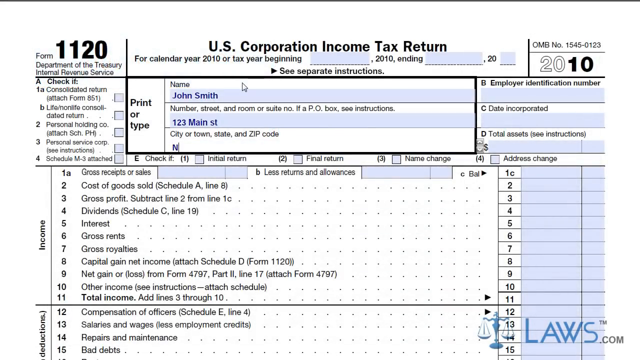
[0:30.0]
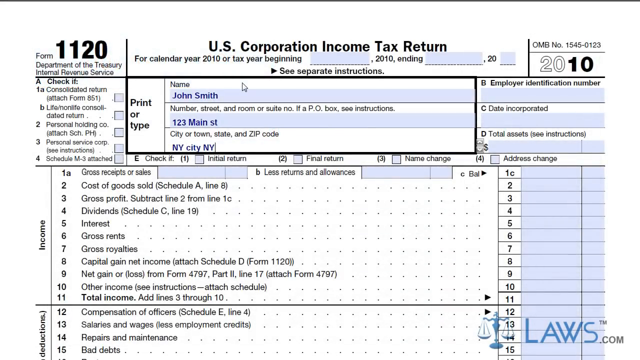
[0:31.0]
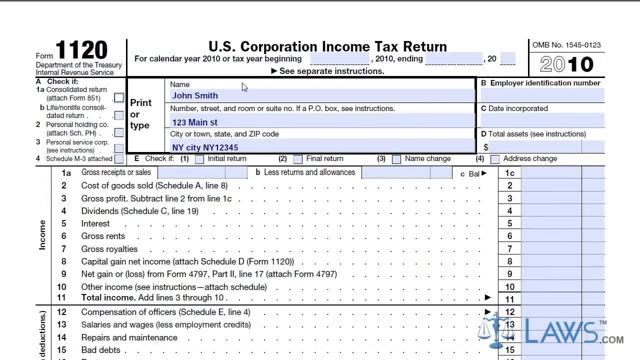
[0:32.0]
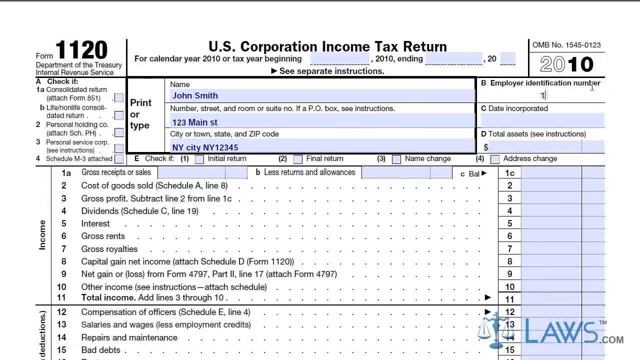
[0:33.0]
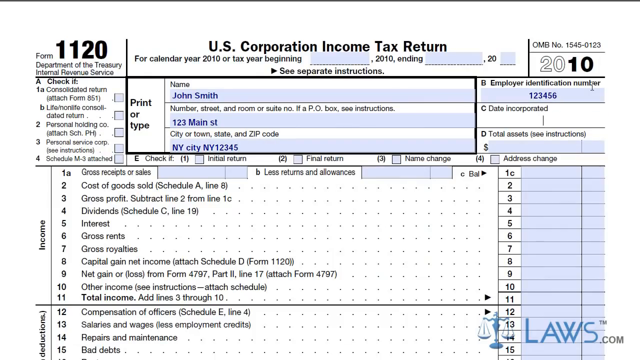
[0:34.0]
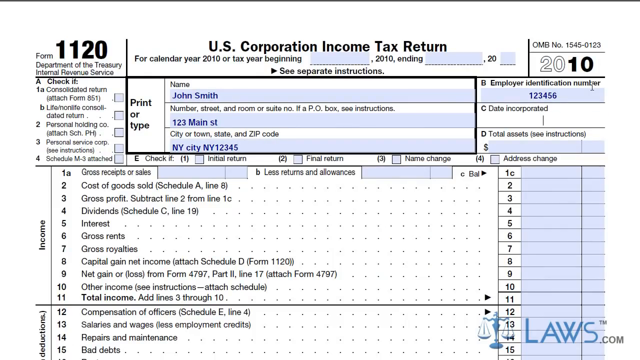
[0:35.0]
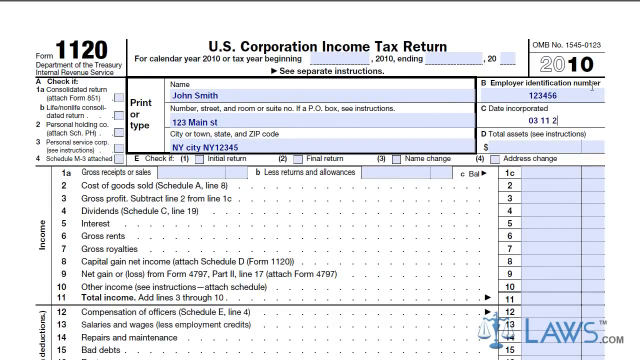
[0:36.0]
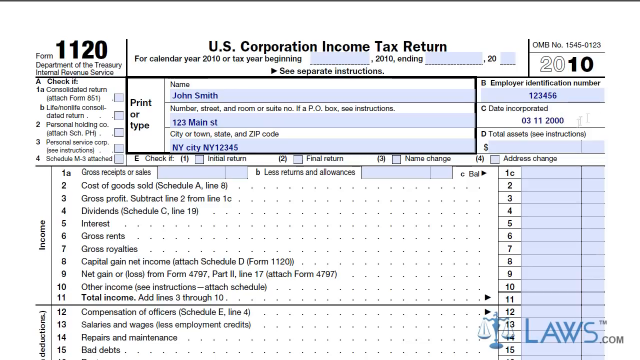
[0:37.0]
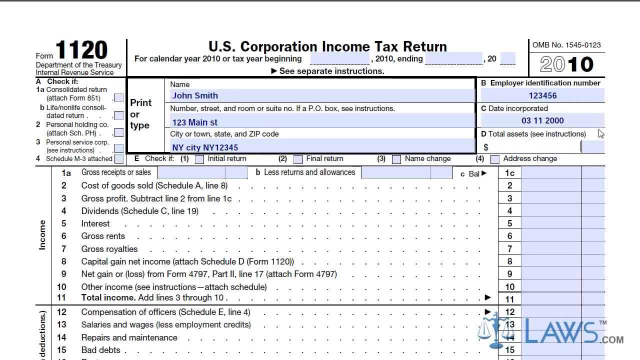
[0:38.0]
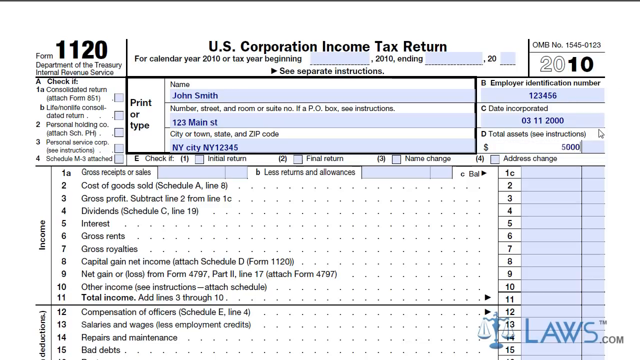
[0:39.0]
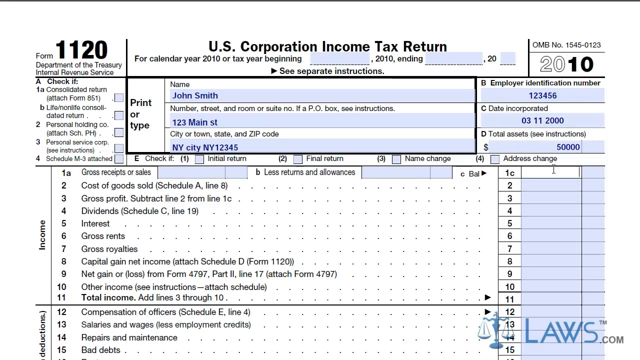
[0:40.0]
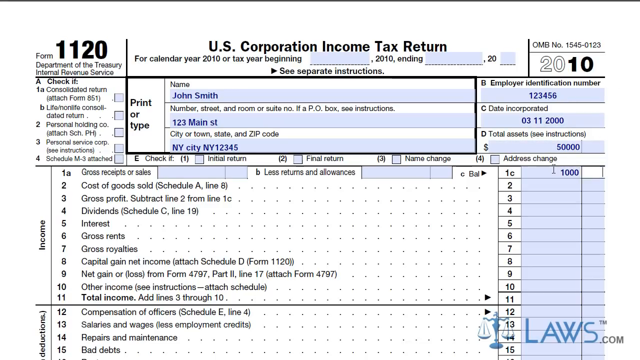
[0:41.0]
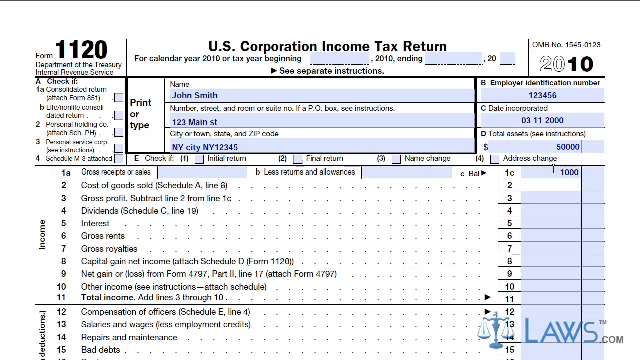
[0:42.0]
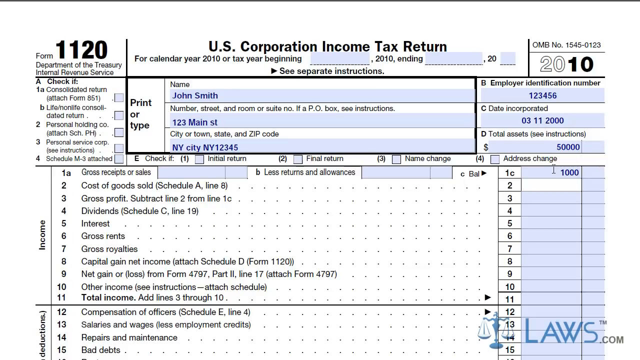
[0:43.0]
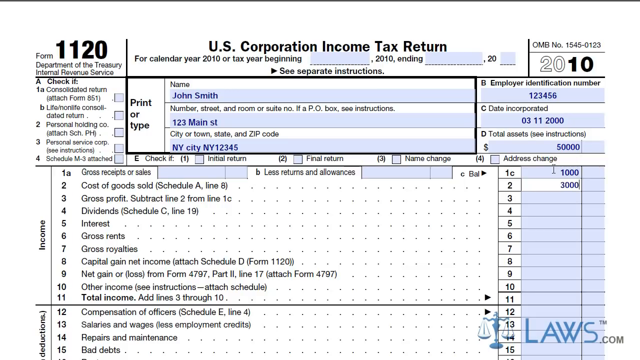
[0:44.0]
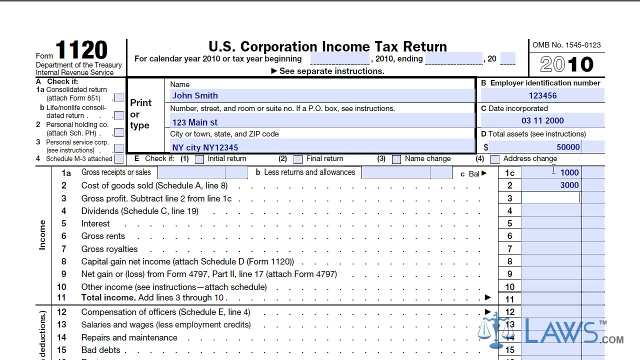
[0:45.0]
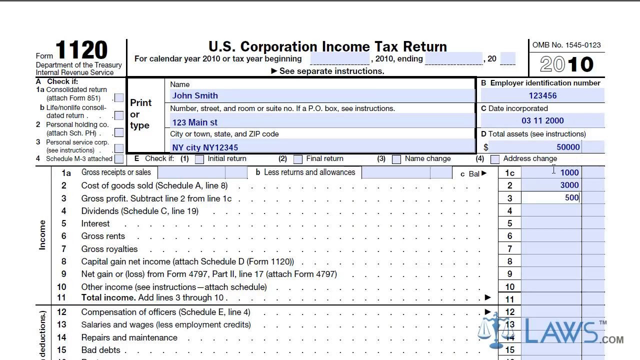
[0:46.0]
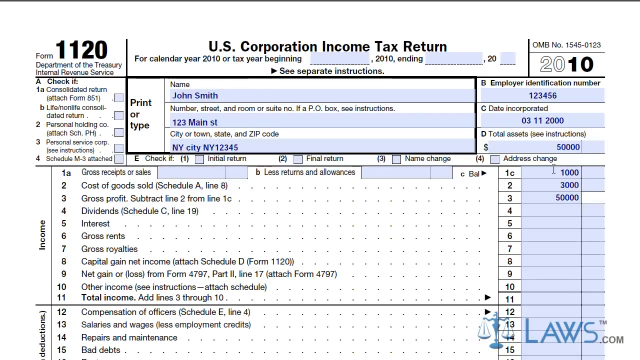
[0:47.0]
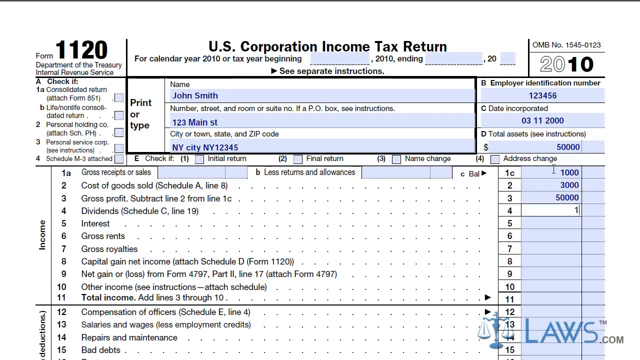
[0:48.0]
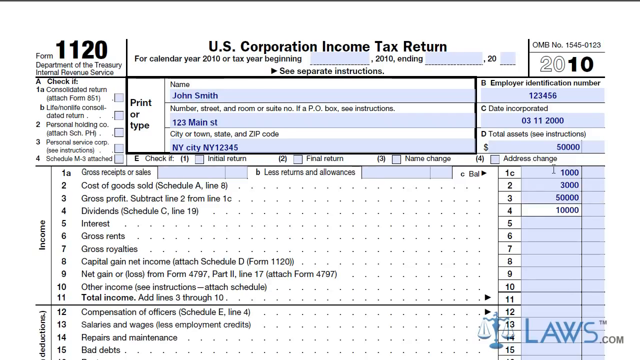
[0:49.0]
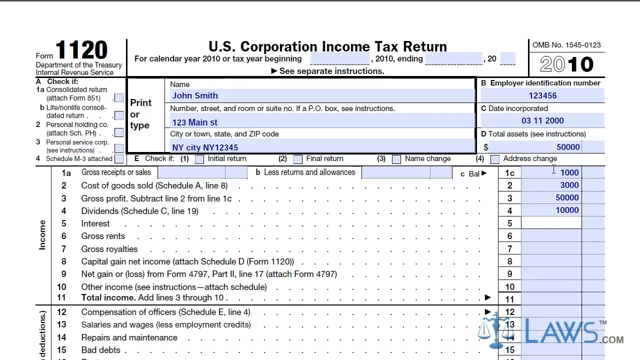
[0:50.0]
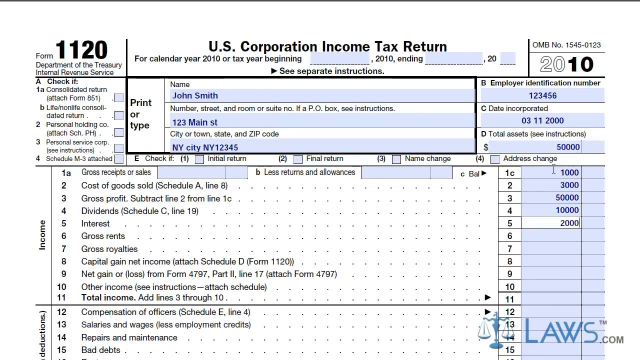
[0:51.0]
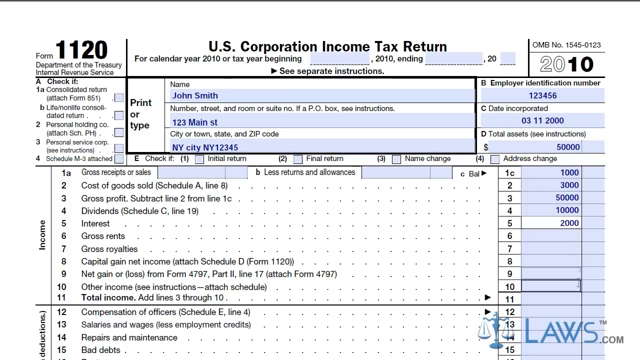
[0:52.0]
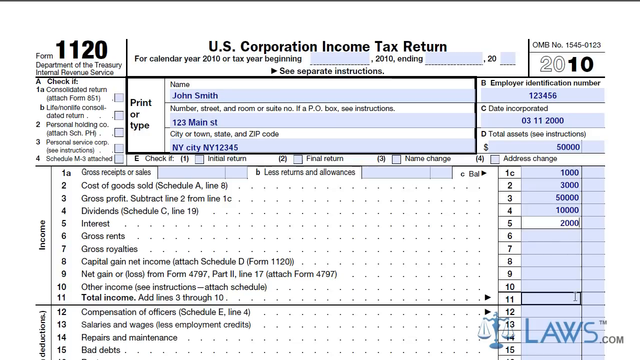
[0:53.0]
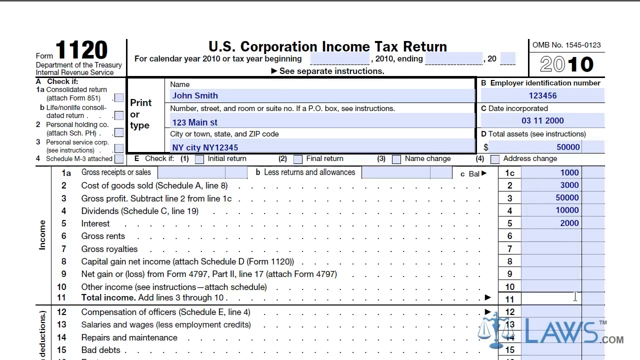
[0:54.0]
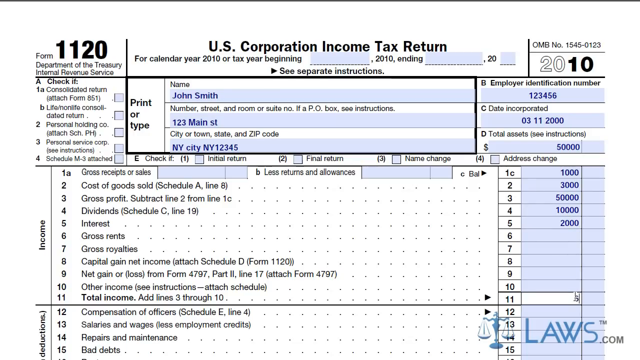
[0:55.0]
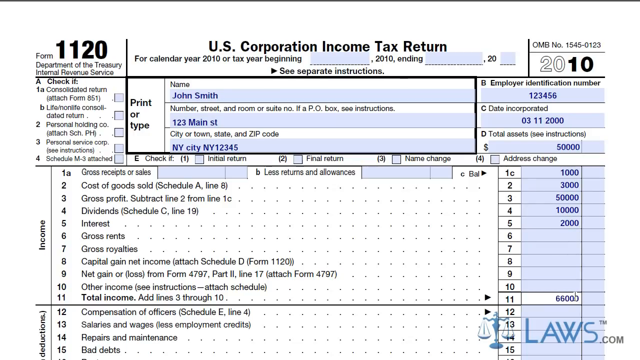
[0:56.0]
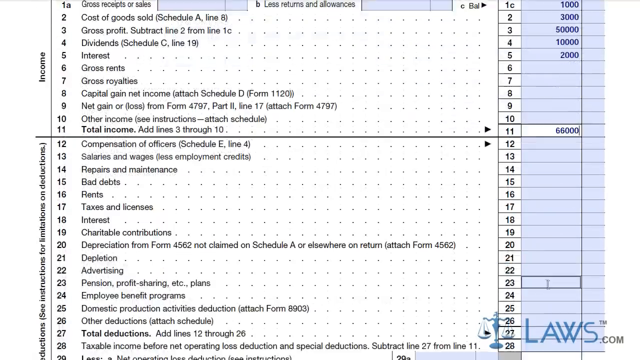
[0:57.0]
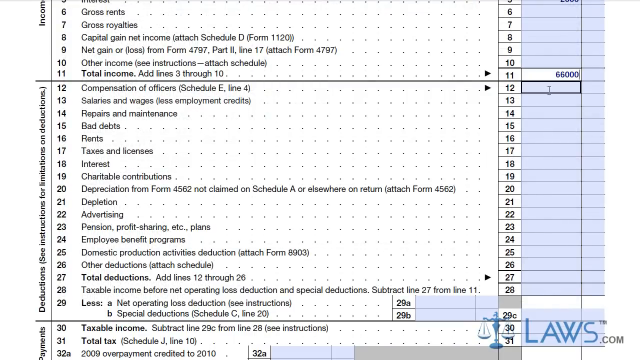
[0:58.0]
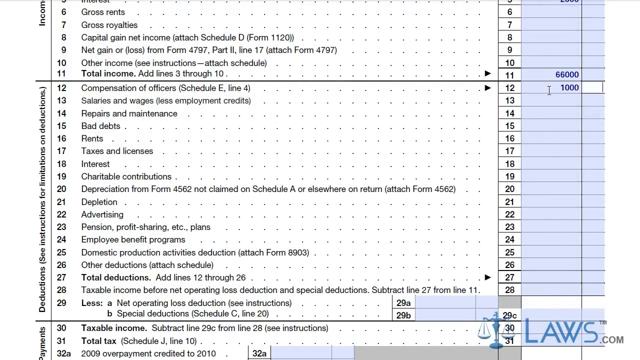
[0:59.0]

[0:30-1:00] In the top right corner of the form 1120 is a form number in very small print, "OMB number 1545-0123," and the year 2010 in black letters, partly in outlined characters, with the "10" in bold black. In the middle, under the income tax return label, is an area to print or type a name, where "John Smith" has been typed in. Below that, a blue space for number, street, and room or suite has "123 Main Street" typed in, and the box below for city or town, state, and zip code has "New York City, New York, 123" typed in. To the right is an area for employer identification number with "123456" typed in, and a date incorporated has also been typed in. Further down are total assets of 50,000, address change, gross receipts sales with 1,000 and 3,000, cost of goods sold, and gross profit of 50,000, followed by the other income boxes. This section has blue boxes labeled 1, C, 2, 3, 4, 5, 6, 7, 8, 9, 10, and 11.